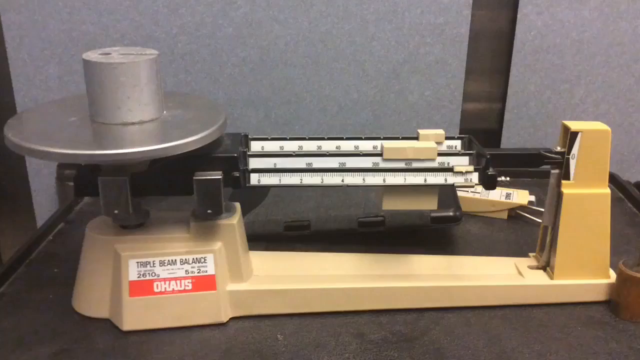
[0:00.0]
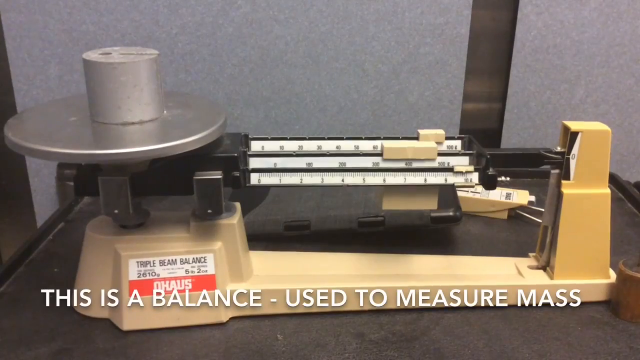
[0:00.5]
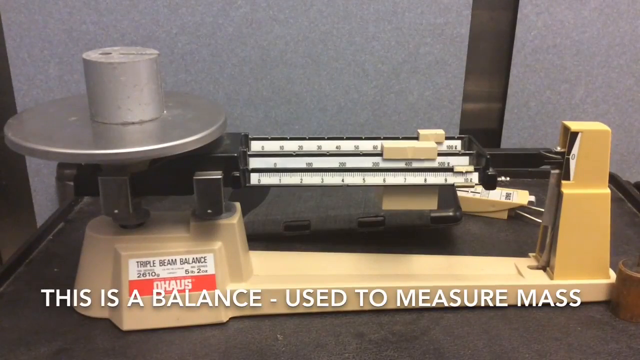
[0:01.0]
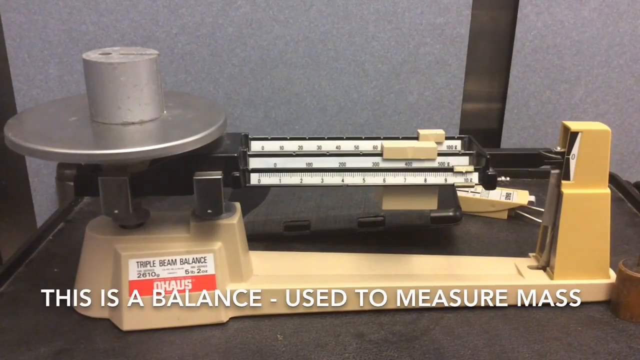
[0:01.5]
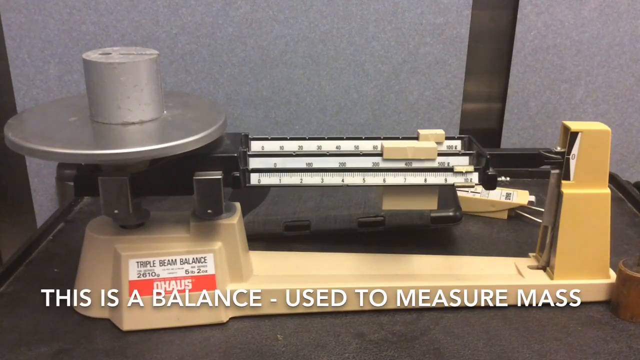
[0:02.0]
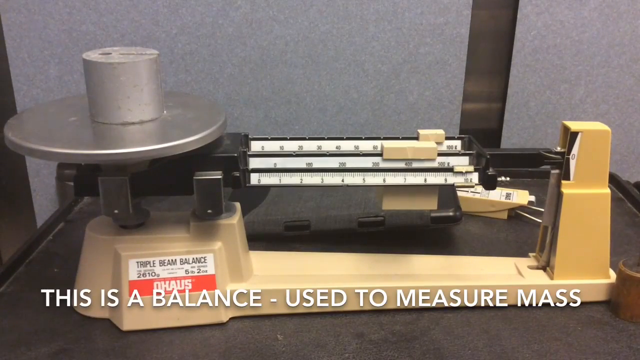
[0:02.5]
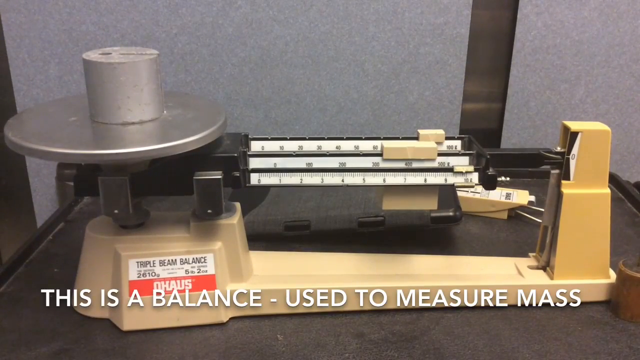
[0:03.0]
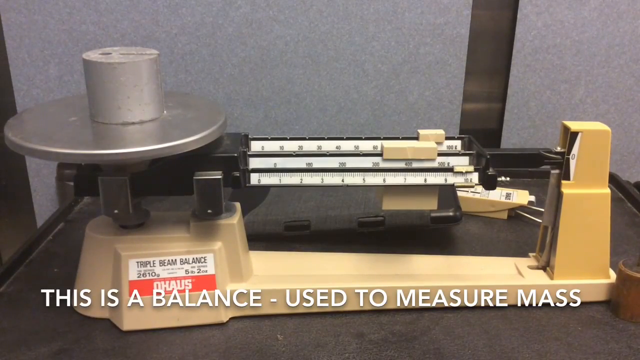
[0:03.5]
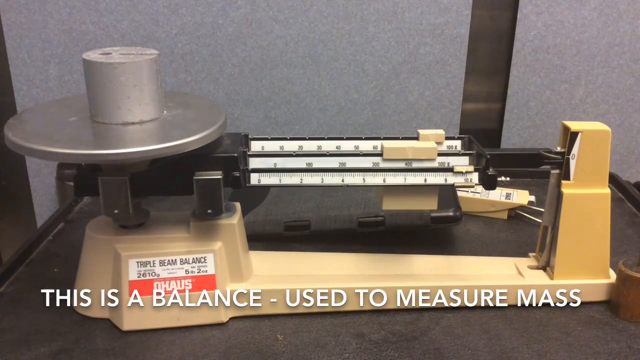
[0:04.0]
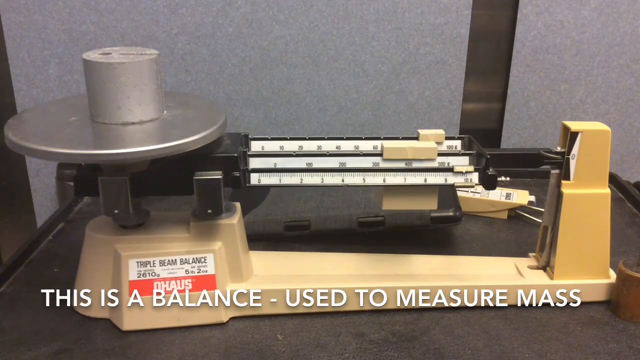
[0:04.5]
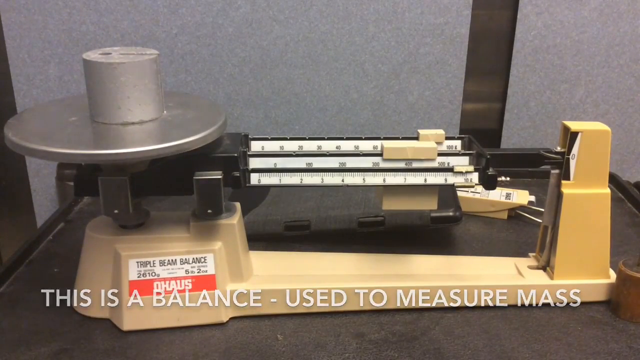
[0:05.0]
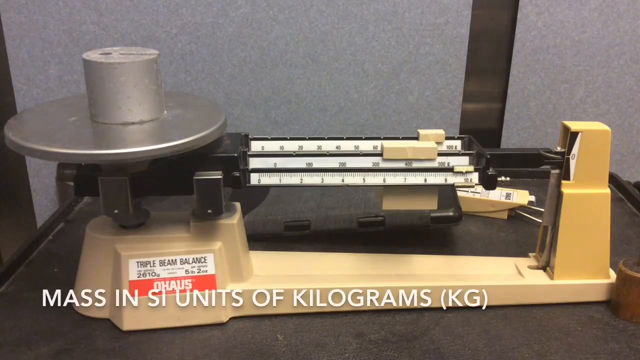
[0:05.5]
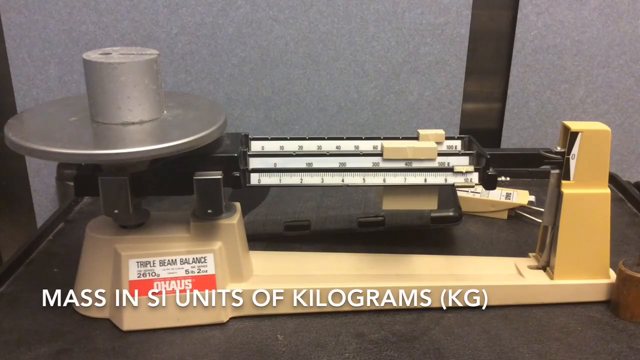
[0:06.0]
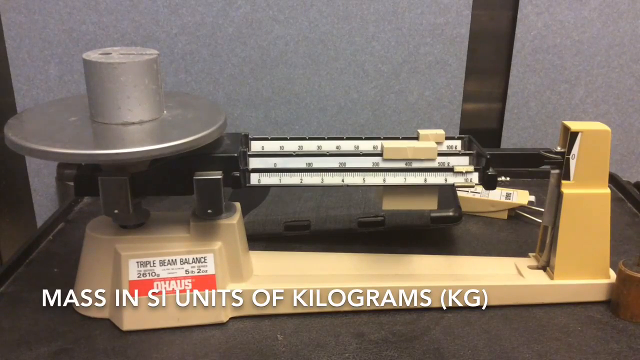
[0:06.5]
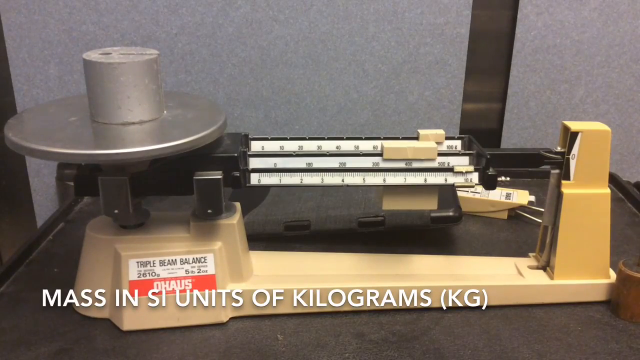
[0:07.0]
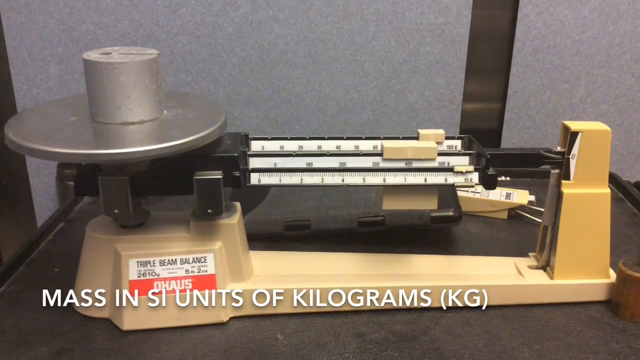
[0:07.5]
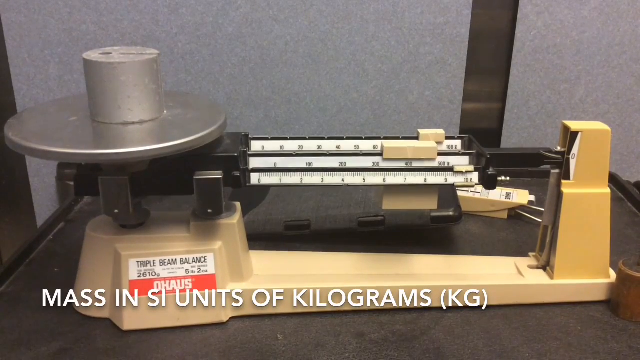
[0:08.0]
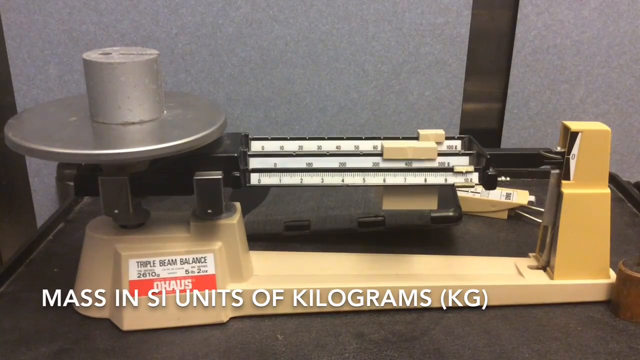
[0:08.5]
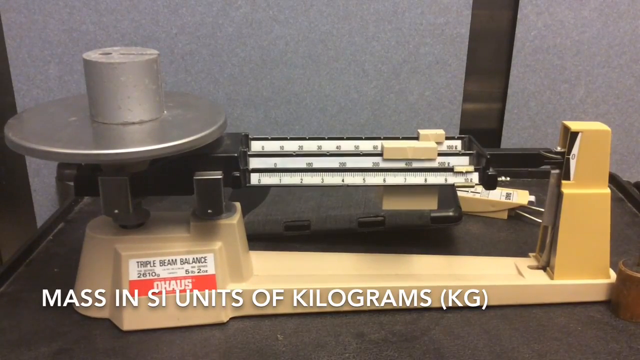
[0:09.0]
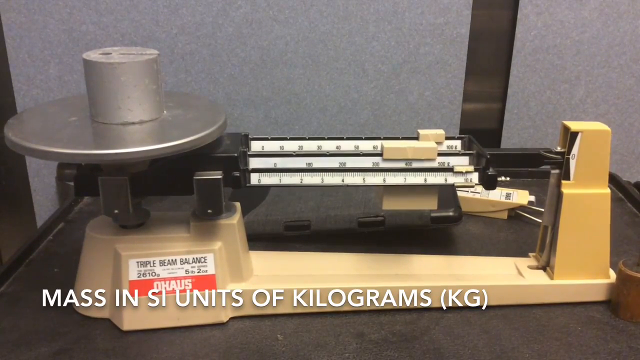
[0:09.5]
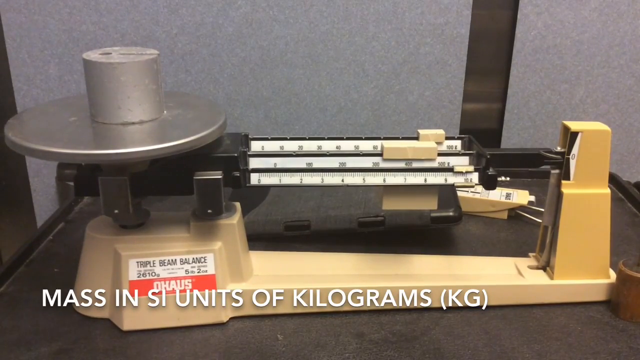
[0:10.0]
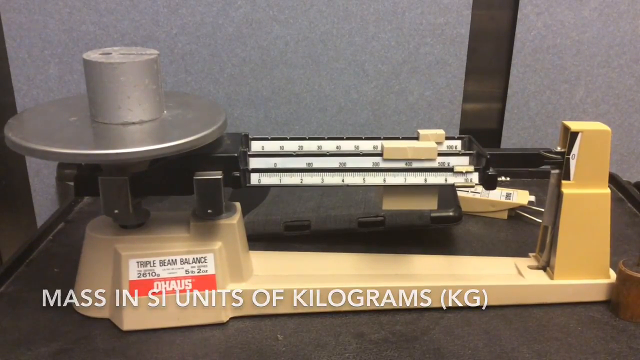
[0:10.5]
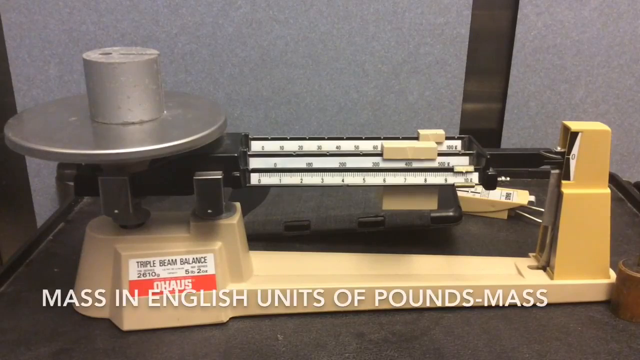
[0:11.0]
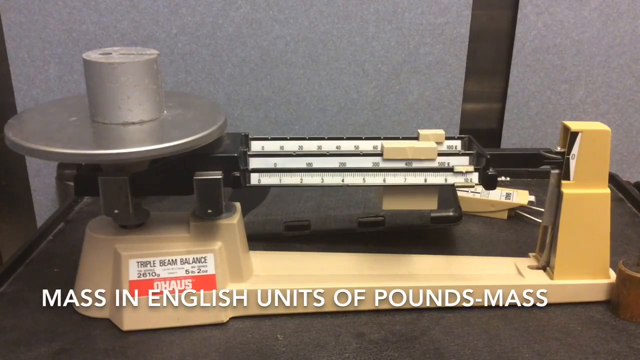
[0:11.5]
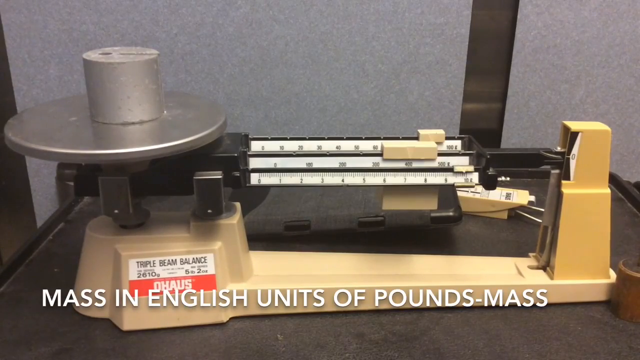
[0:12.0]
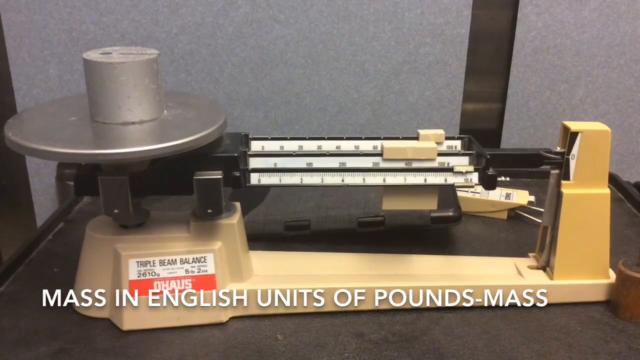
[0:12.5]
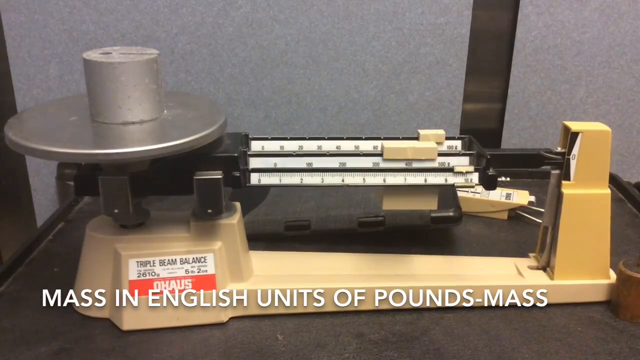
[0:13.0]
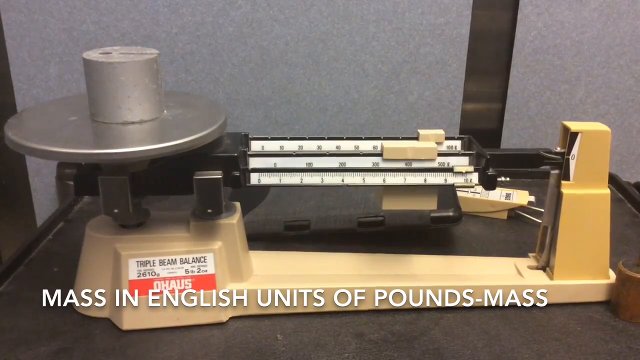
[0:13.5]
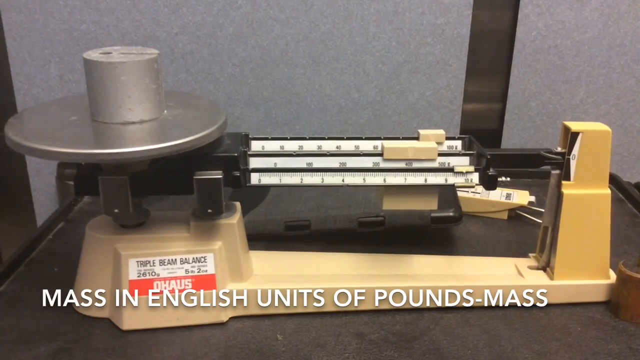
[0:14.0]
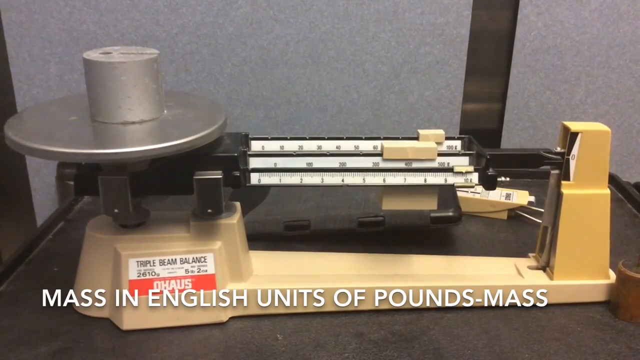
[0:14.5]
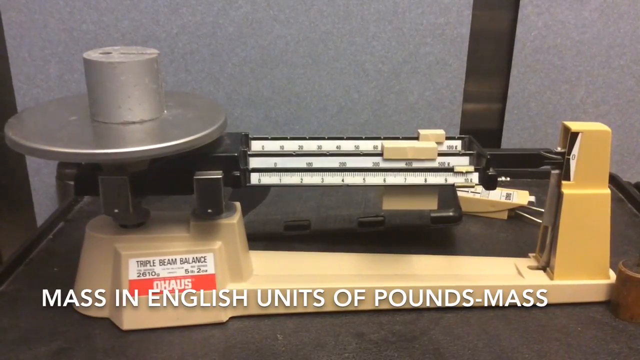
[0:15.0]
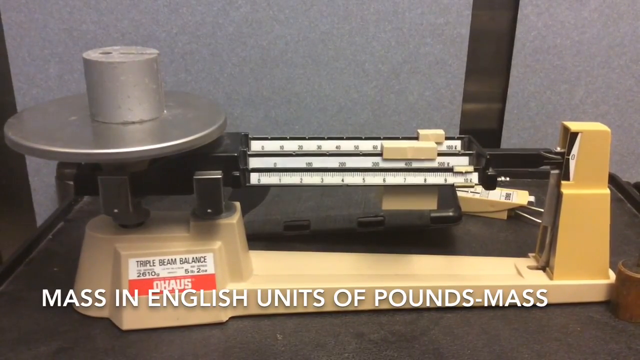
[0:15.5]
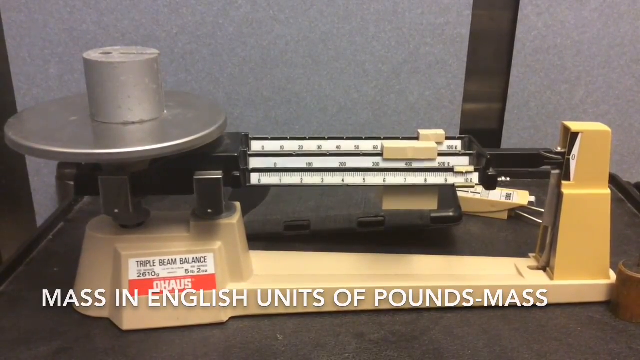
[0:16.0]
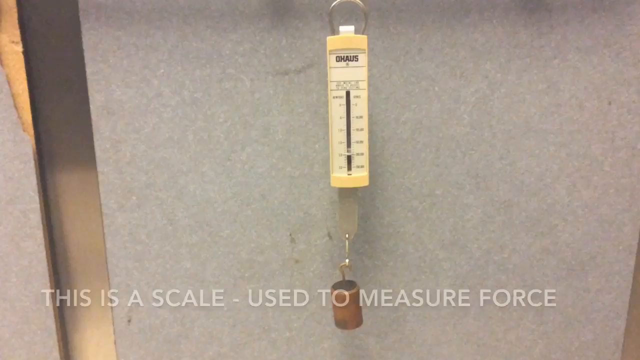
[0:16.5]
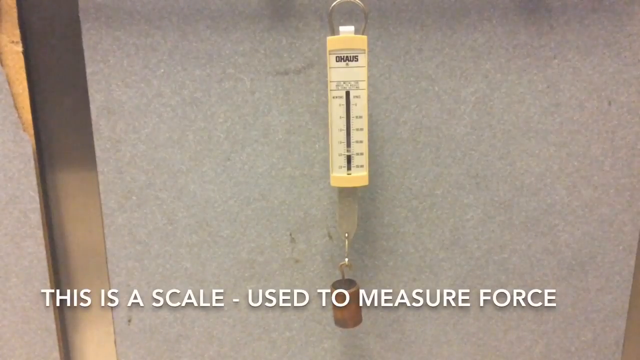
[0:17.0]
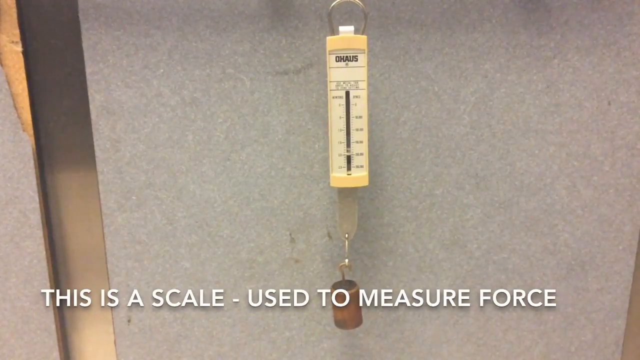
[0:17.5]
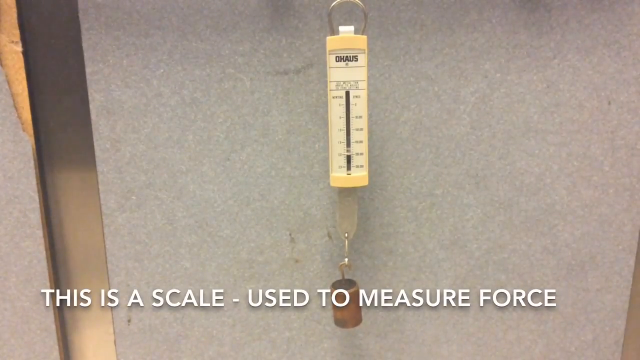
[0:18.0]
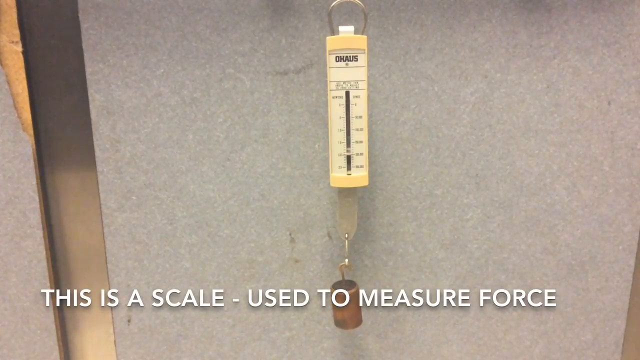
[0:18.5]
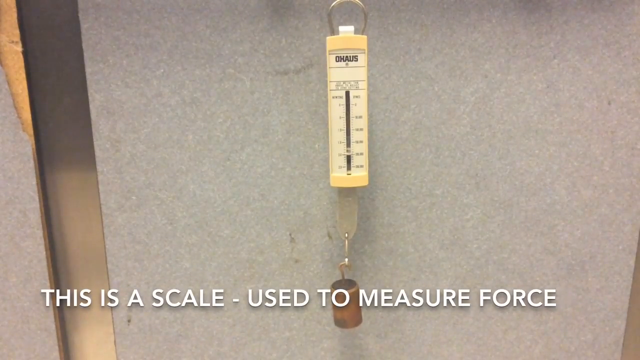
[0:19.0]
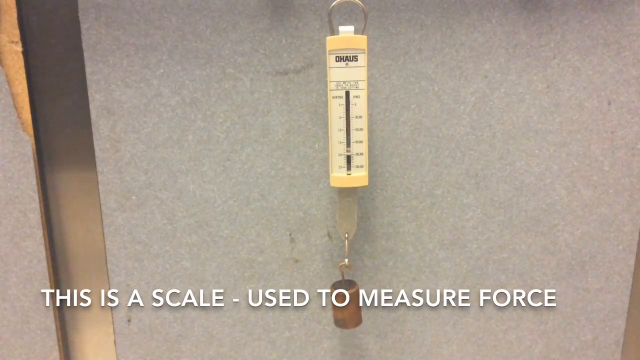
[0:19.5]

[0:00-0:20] The video starts out showing a scale on a black surface that looks more like a tray. The scale is long and lies horizontally. On the left side there is a silver plate with a silver cylindrical weight on it. The scale itself is a light yellow color, and there are white things with sliders across the scale that can measure the weight. Text on the bottom reads "this is a balance used to measure mass," "mass in SI units of kilograms (kg)" and "mass in English units of pounds." The table kind of shakes a little, and then the video shows a scale hanging on the wall. White letters read "this is a scale used to measure force." The scale hangs from a silver loop. It is yellow with a white base, and it has a silver thing hanging from the bottom of it with a brown knob, which looks like it is made of wood, hanging from the bottom. The words appear on the bottom of the screen.